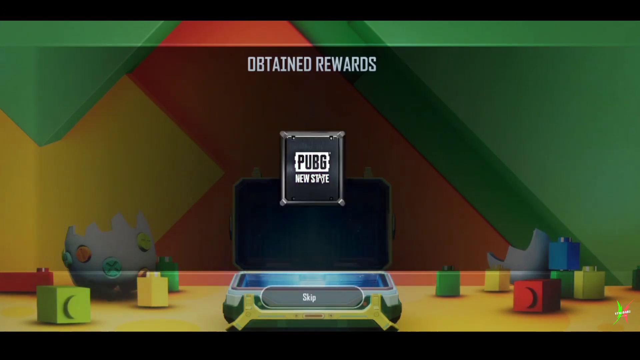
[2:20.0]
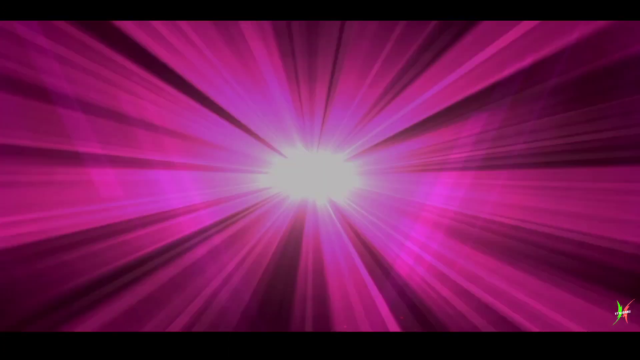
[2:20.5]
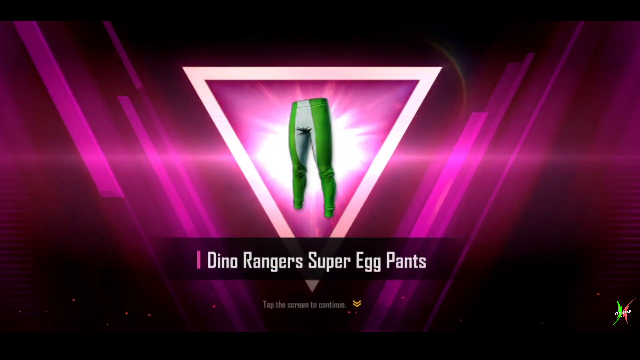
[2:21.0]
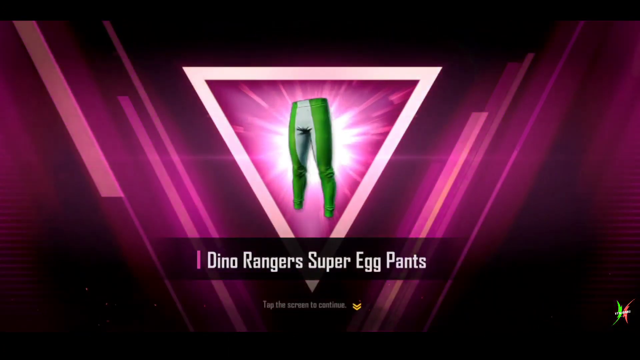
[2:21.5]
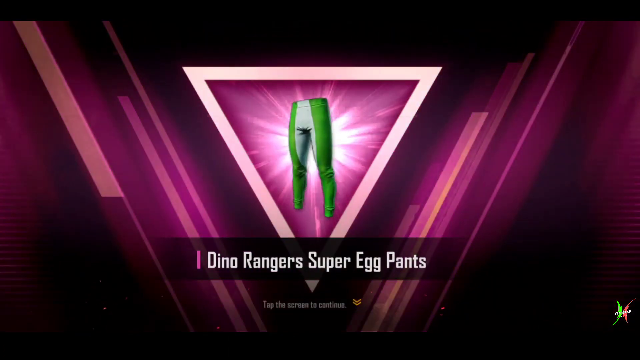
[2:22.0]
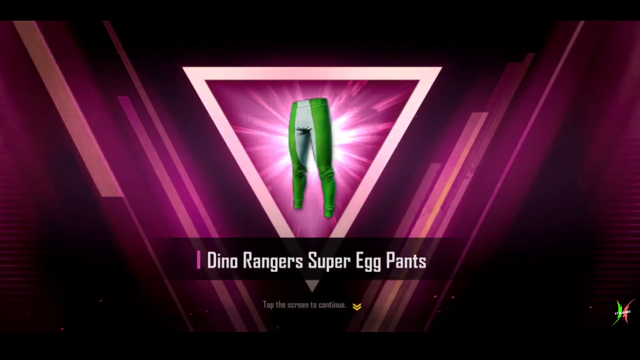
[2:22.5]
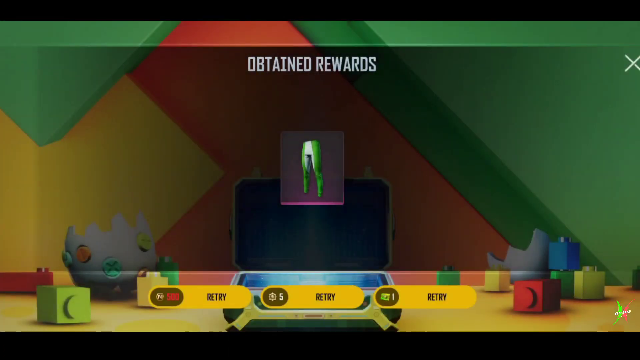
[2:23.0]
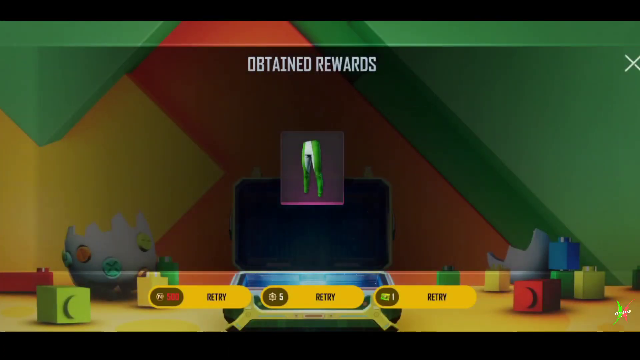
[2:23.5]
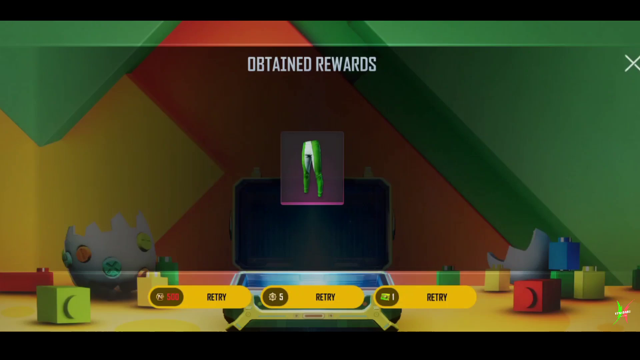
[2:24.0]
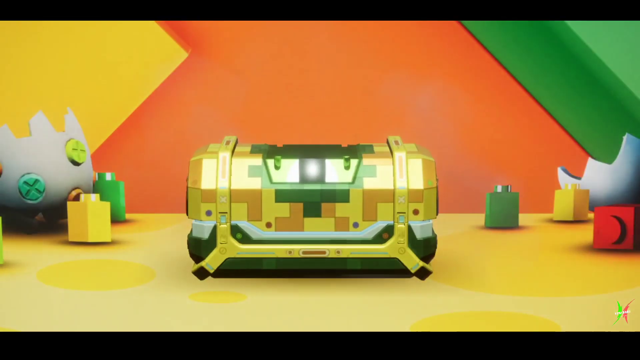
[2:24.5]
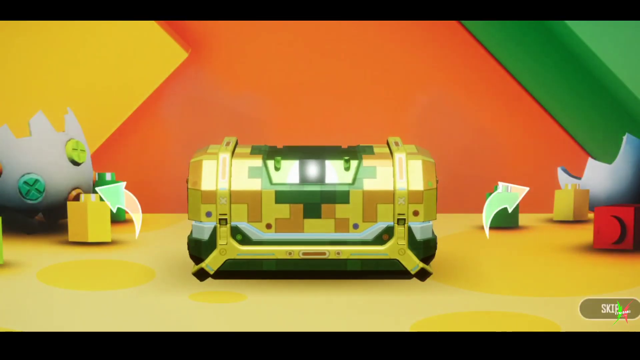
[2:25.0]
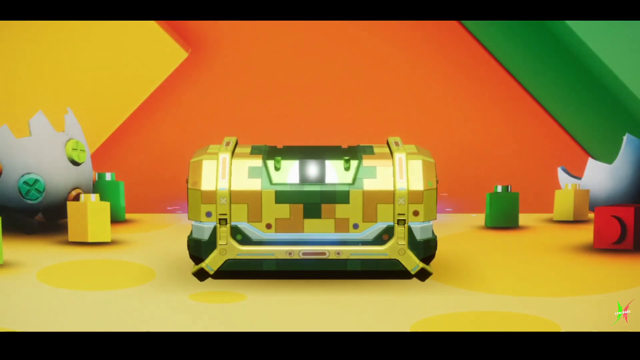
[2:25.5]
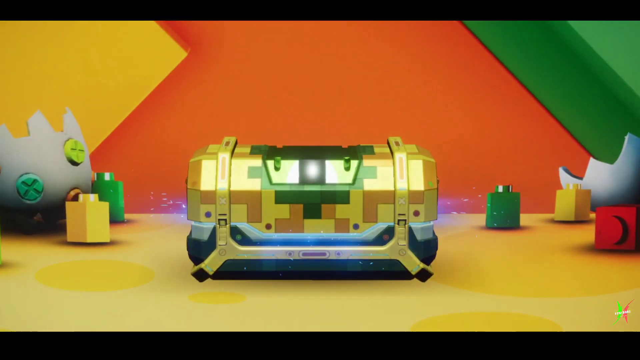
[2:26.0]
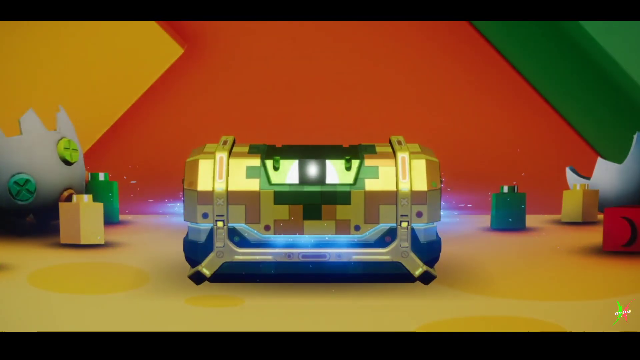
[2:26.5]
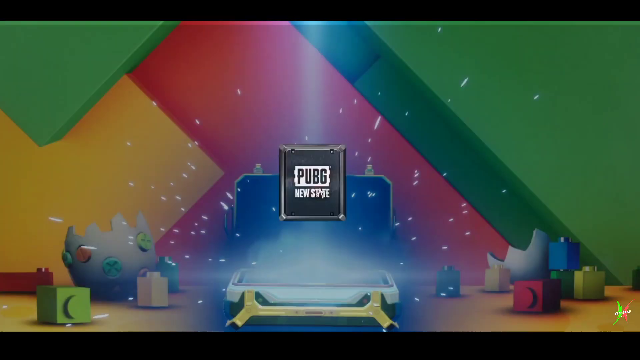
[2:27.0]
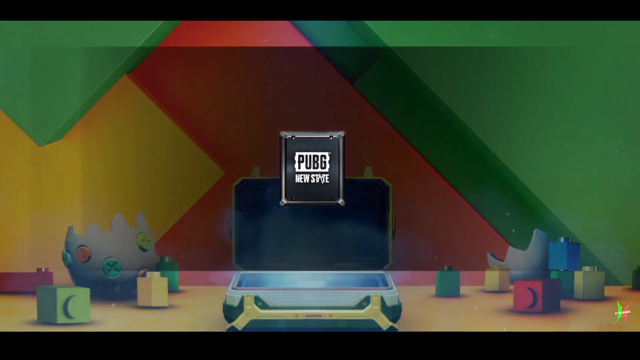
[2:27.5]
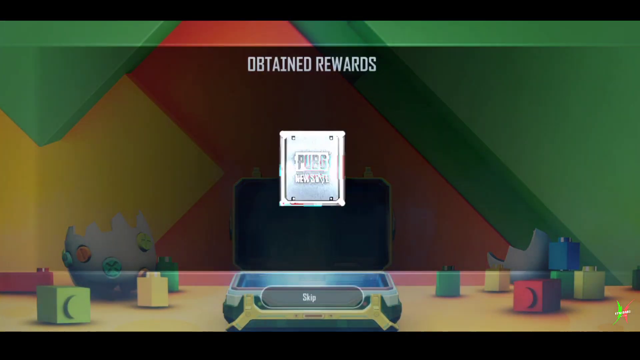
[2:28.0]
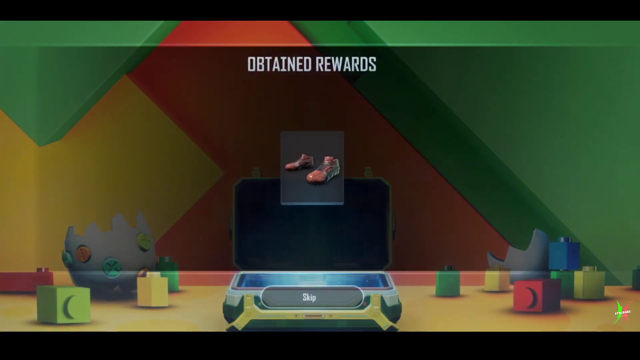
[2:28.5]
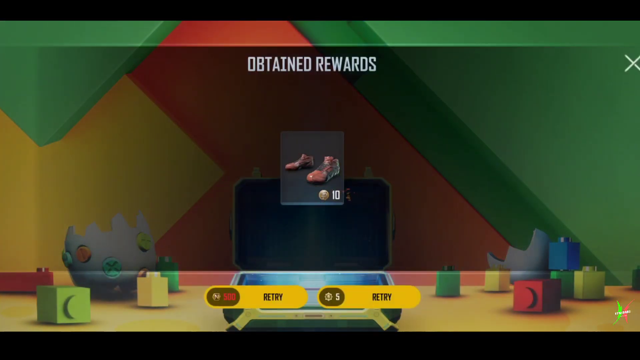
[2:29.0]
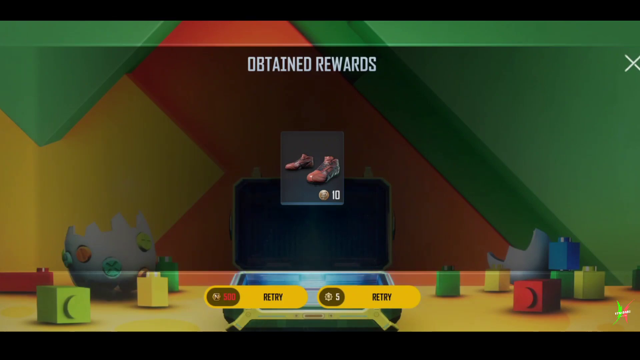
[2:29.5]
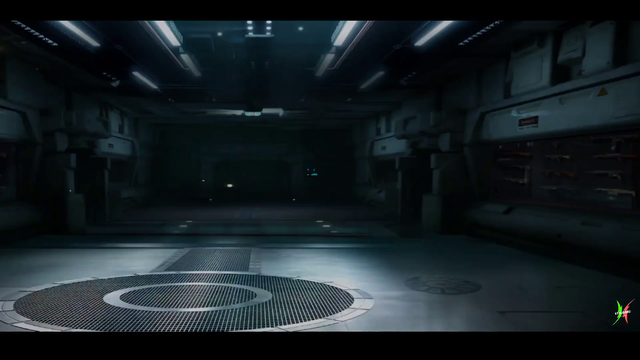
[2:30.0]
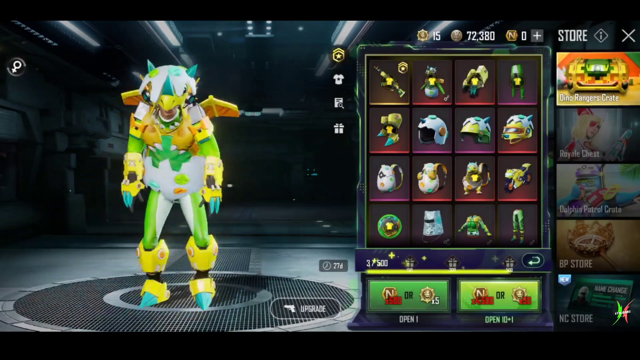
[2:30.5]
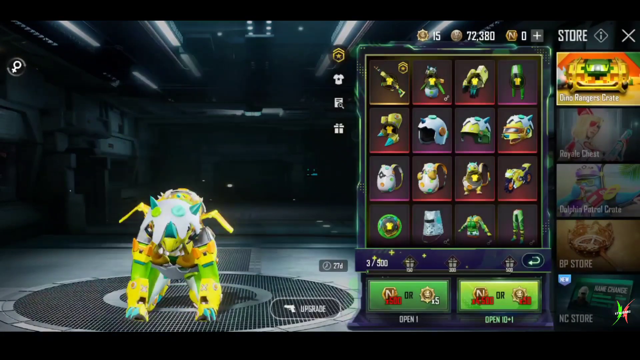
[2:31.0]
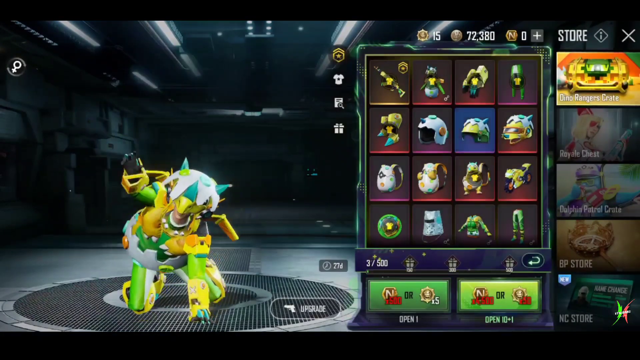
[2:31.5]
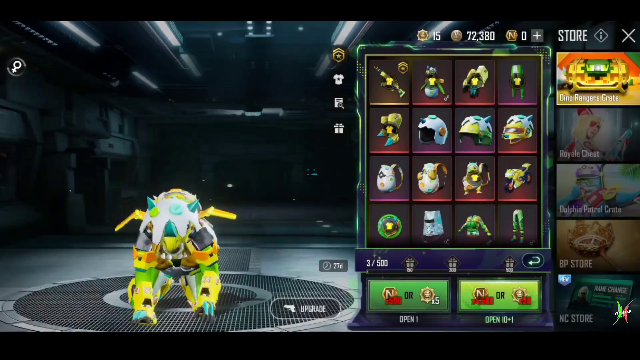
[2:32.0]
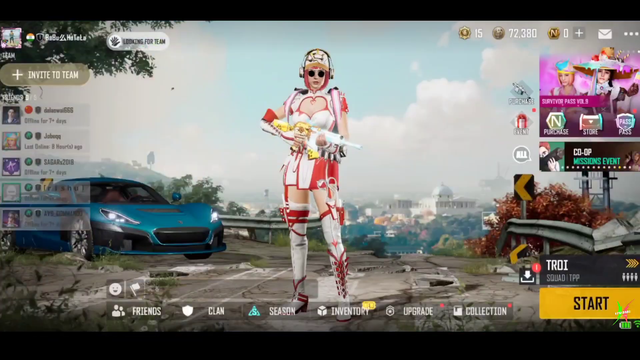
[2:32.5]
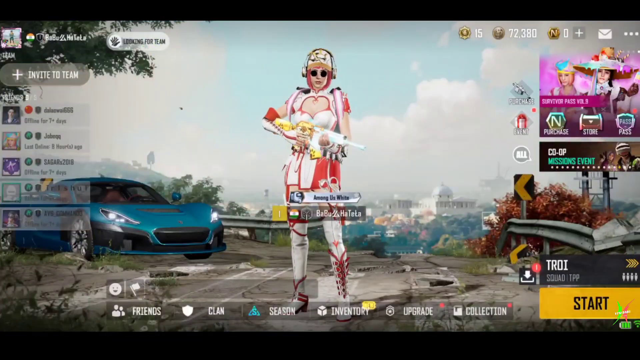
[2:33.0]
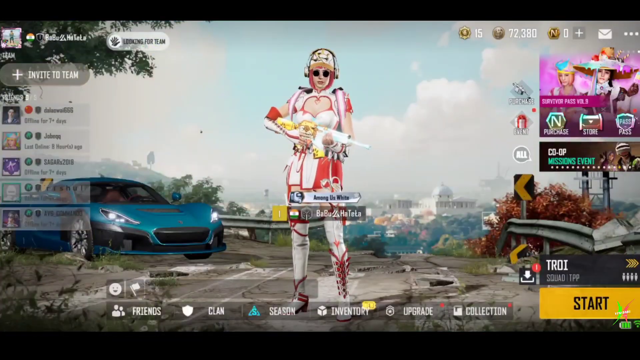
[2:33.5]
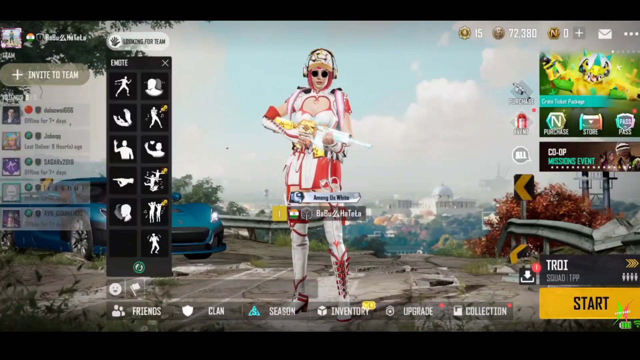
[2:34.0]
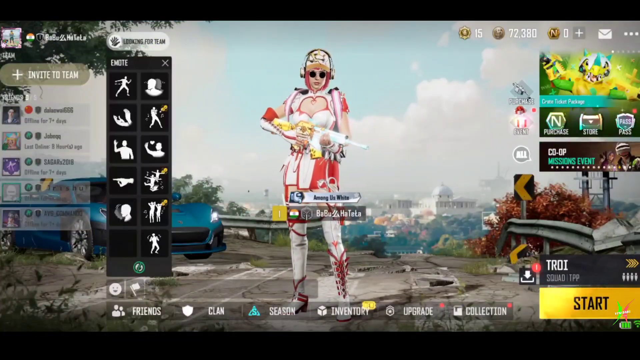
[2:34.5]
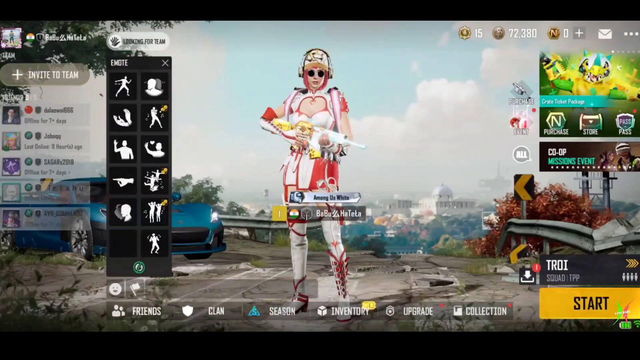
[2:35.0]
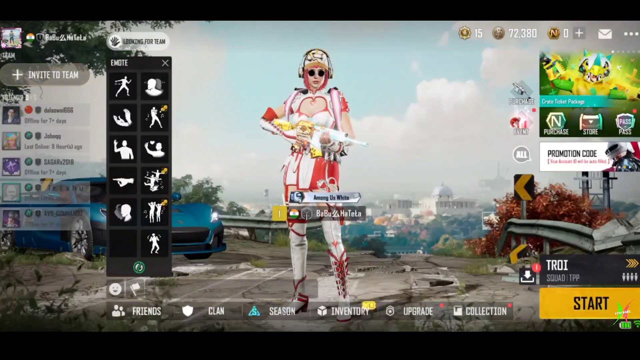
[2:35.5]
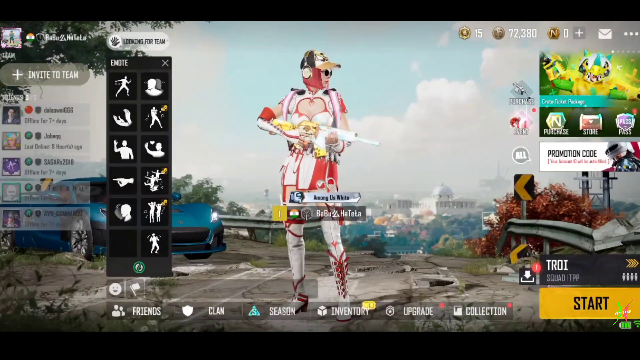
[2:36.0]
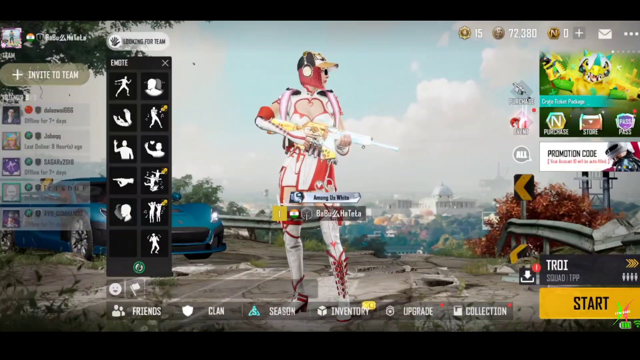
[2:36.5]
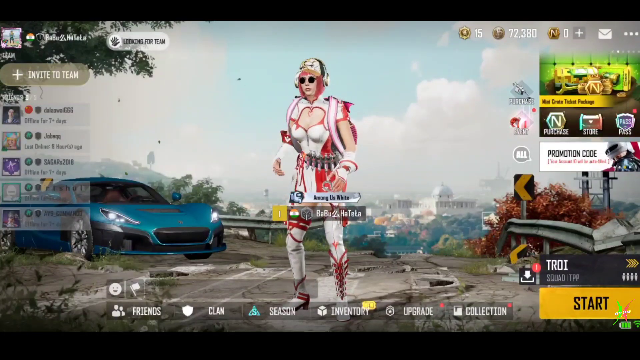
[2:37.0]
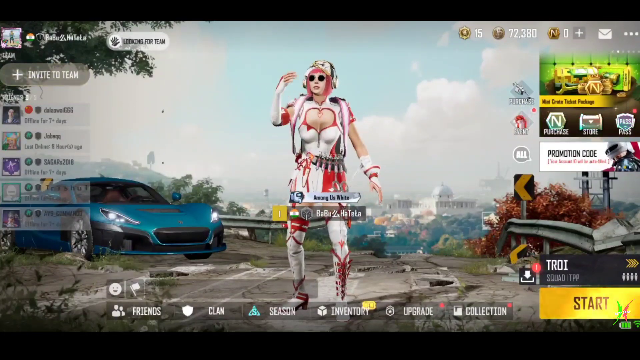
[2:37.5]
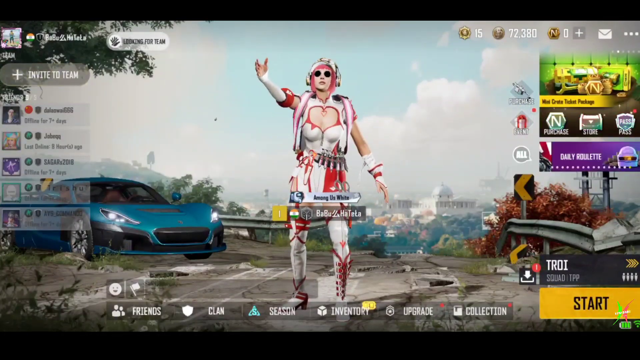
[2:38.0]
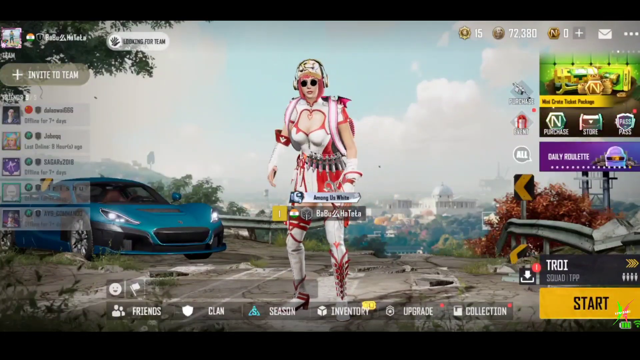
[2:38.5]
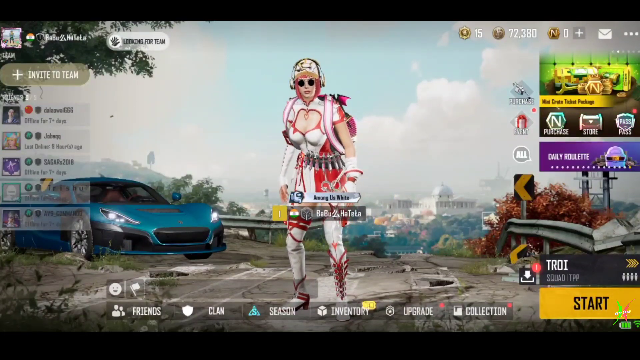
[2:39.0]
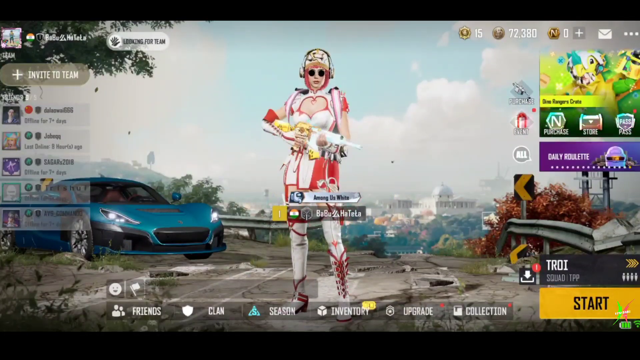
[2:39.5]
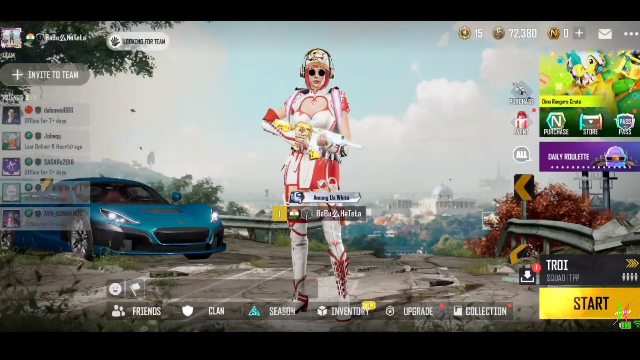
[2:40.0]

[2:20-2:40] The individual opens the purple square of the motorcycle BMX green pants. They then open a third crate, which shoots out a blue gleam of laser and gives what appears to be regular red athletic-style shoes. The home screen follows, with an Indian flag in the middle showing the individual is Indian. They are part of a clan, with text reading "a Babu." The character appears to be holding a gun and is a woman with red hair, a busty chest, a hat, and headphones over her head. On the left side, the list of added friends totals five. On the right side are other cosmetics, such as "Survivor Pass Volume 9," which displays two figures that appear to be women, one wearing a beret and the other wearing what appears to be a witch's hat.